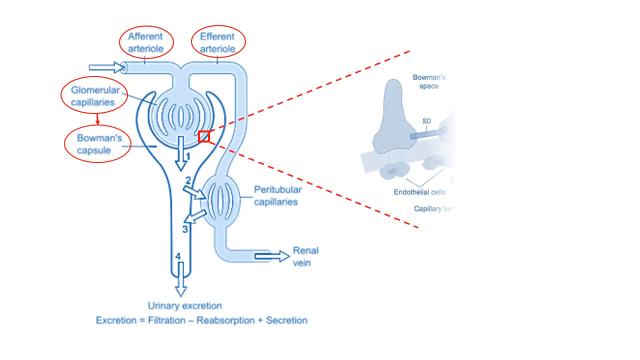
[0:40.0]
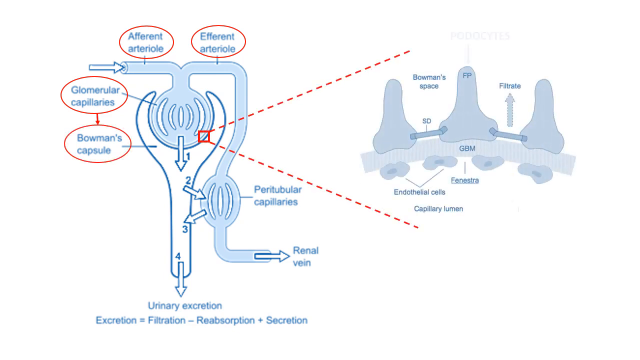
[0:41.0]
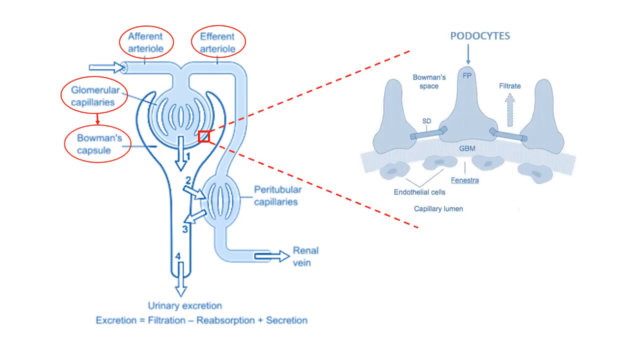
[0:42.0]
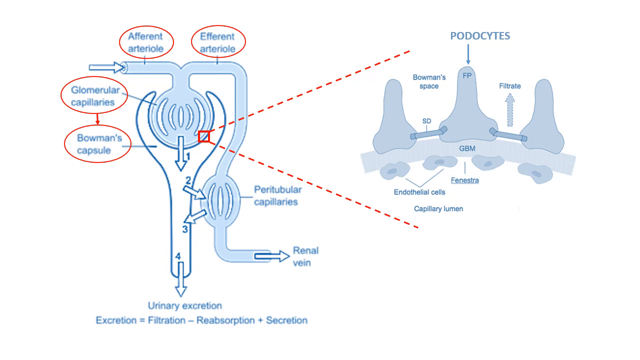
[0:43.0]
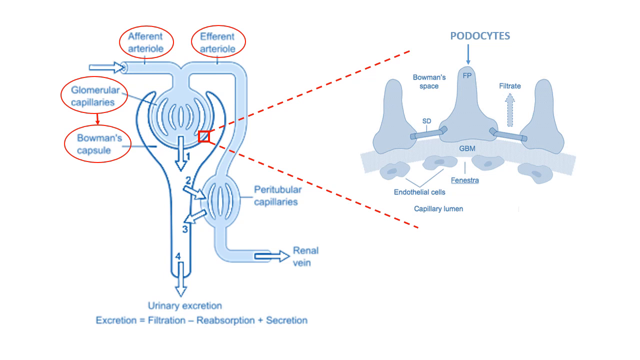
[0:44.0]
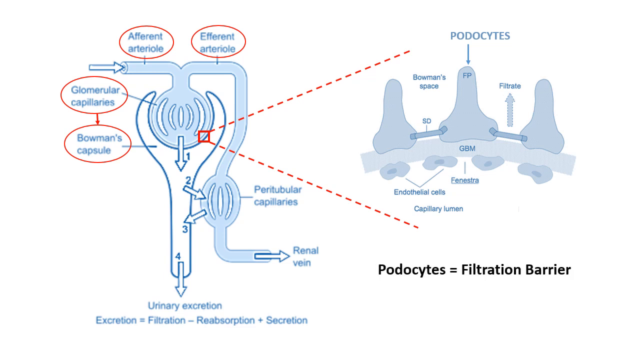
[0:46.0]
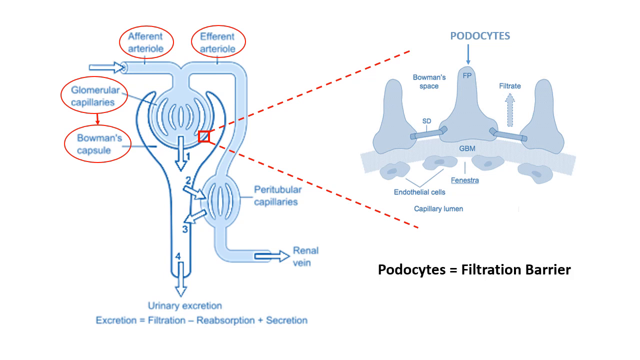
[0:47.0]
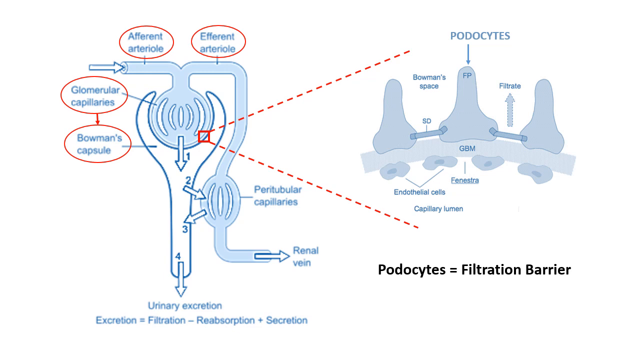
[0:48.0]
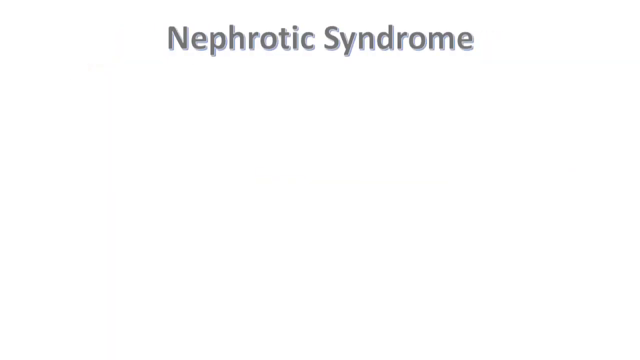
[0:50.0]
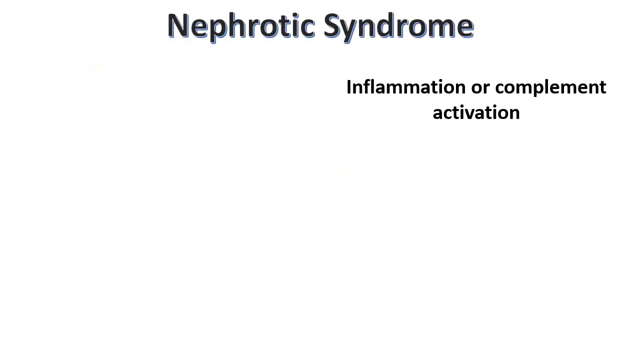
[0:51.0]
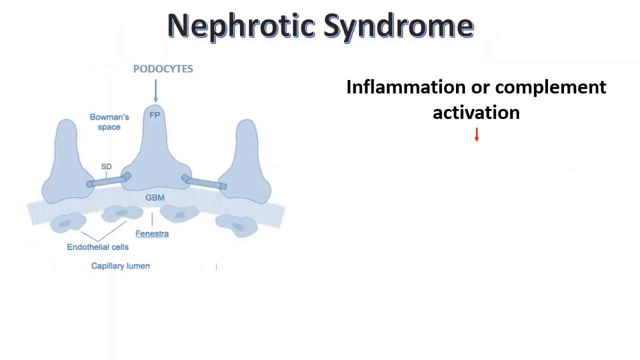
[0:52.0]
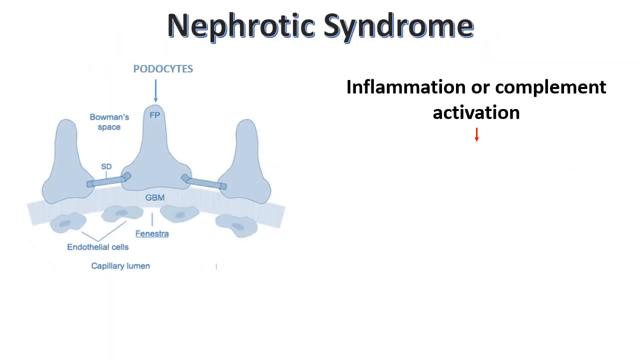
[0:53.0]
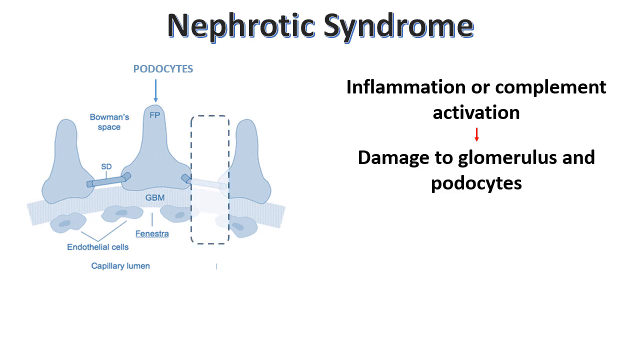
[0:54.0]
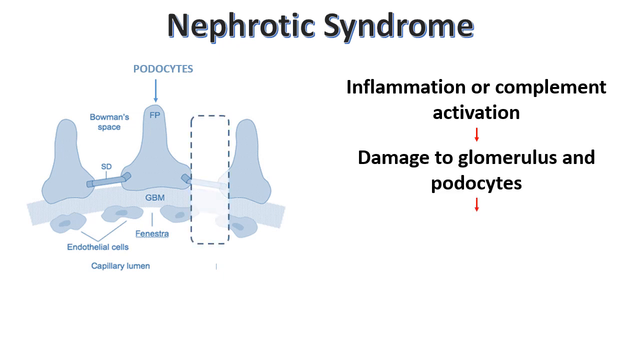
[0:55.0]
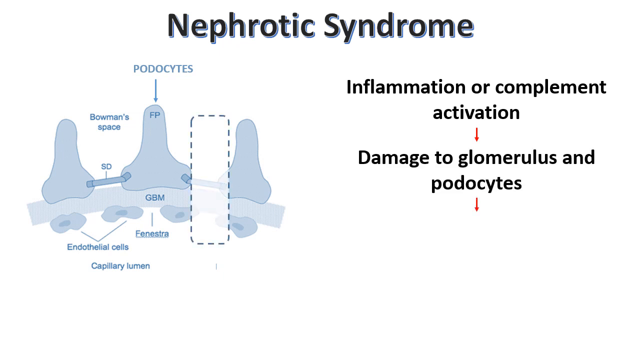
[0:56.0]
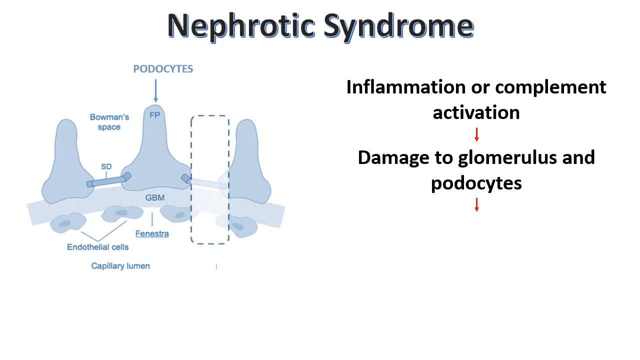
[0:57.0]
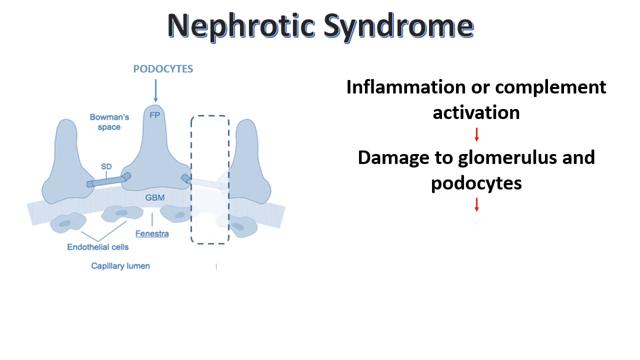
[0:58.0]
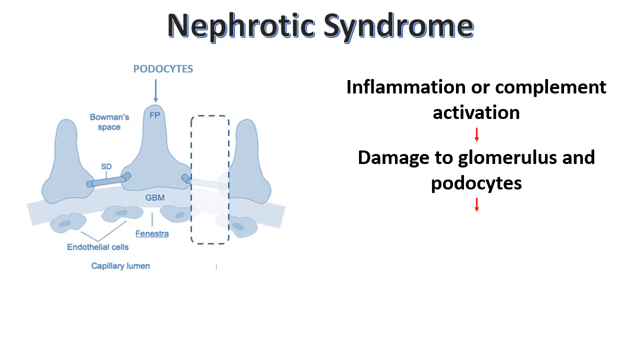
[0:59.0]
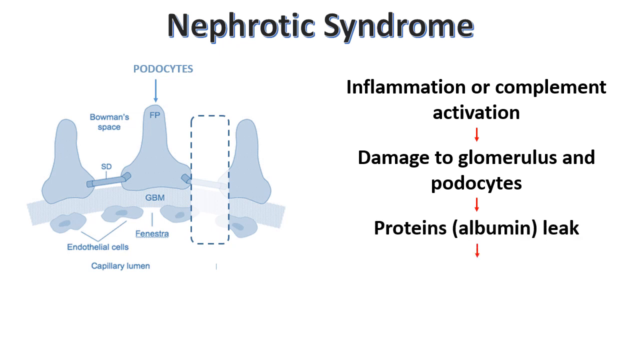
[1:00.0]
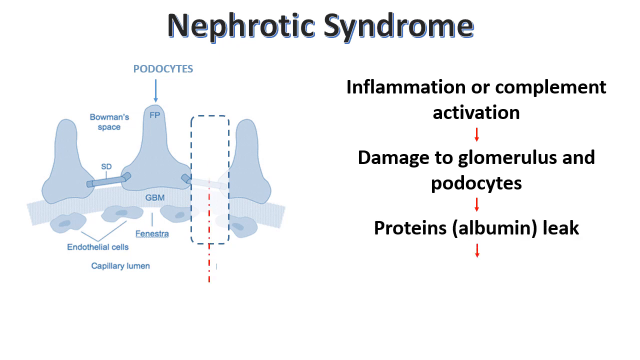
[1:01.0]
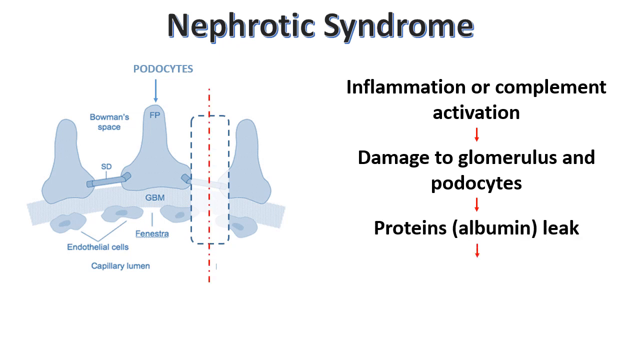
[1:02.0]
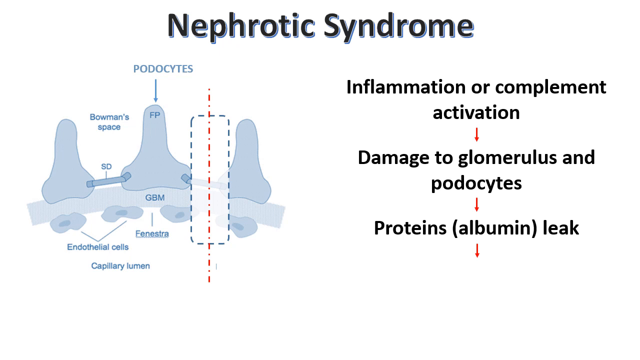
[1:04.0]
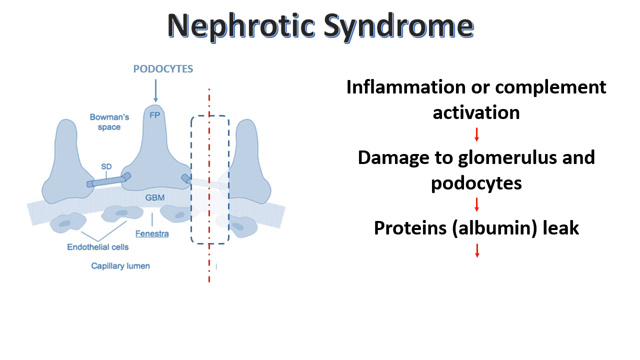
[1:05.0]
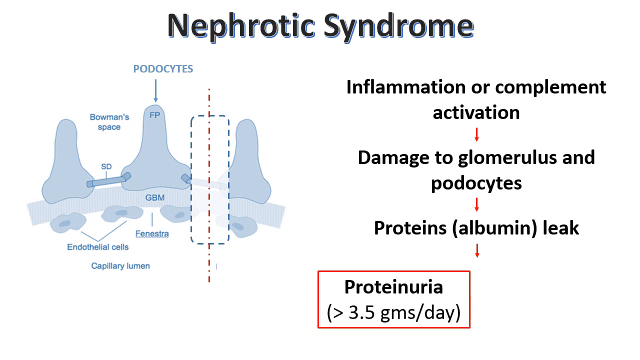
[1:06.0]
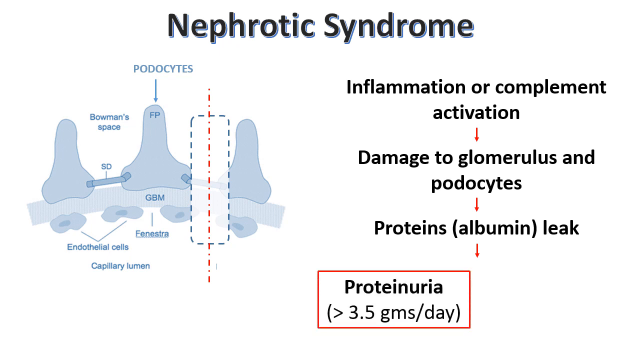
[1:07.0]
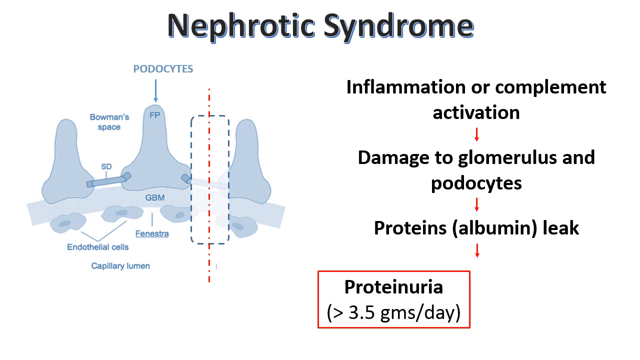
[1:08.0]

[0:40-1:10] The left diagram is now clear, and red circles surround four labels: "Bowman's capsule" at the bottom left, "glomerular capillaries" above it, "afferent arteriole" above and to the right, and "efferent arteriole" to the right of that. A red square appears around an area between the glomerular capillaries and Bowman's capsule, and a red dotted line comes off its right corners, making an arc toward the second diagram, which starts appearing on the right. Its parts kind of look like triangles with curved-in lines and no points, one on the left, one on the right and one in the center. The center one is labeled "podocytes", the space between the first and second "Bowman's space", and between the second and third "filtrate". Below, in the very center of the middle one, is the label "finestra". Four blobs underneath the three triangle shapes are labeled "endothelial cells", and underneath that is "capillary lumen". Below the right diagram appears black text reading "podocytes equal filtration barrier". The screen changes and the diagram that was on the right is now on the left. The title "nephrotic syndrome" appears at the top in black letters shadowed with gray, and underneath it to the right, in smaller text, is "inflammation or complement activation". Below that a small red arrow points down to "damage to glomerulus and podocytes", then another red arrow points down to "proteins (albumin) leak". Another red arrow points down under "proteins", and a red rectangle appears containing "proteinuria", with "(greater than 3.5 GMS per day)" under it.